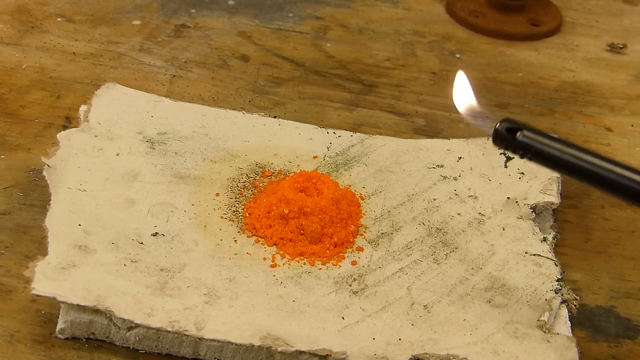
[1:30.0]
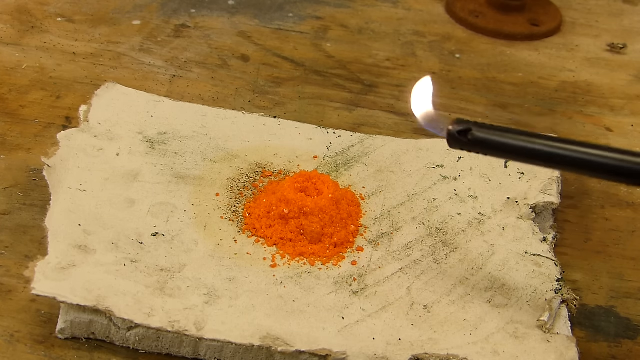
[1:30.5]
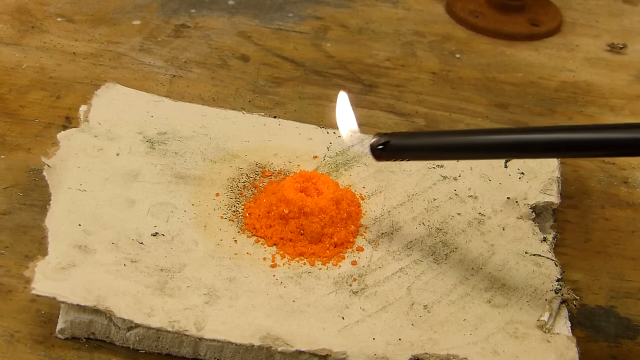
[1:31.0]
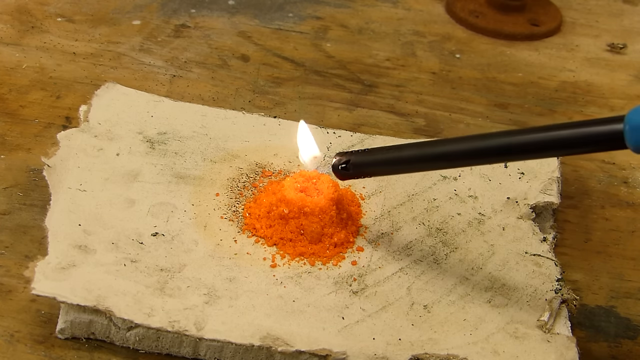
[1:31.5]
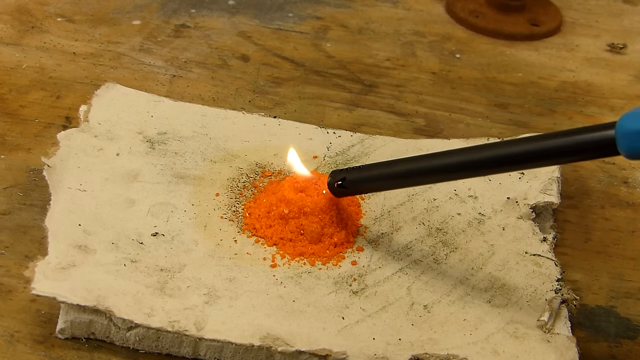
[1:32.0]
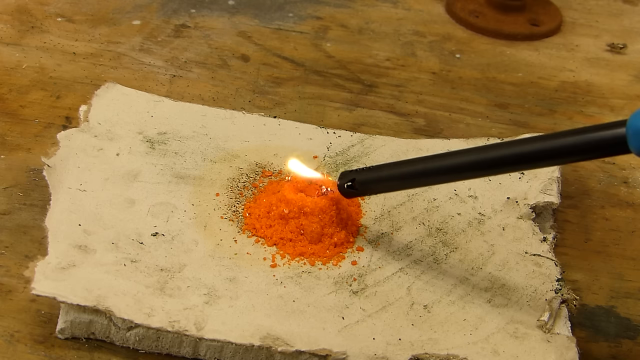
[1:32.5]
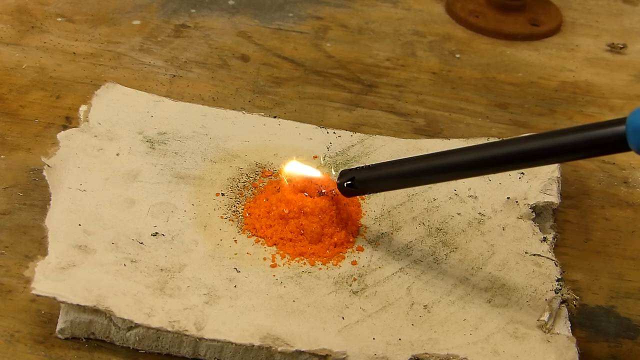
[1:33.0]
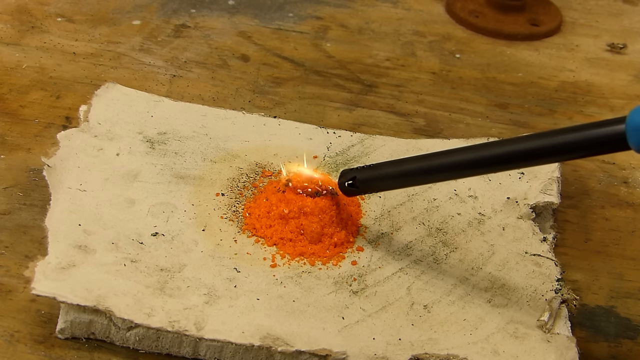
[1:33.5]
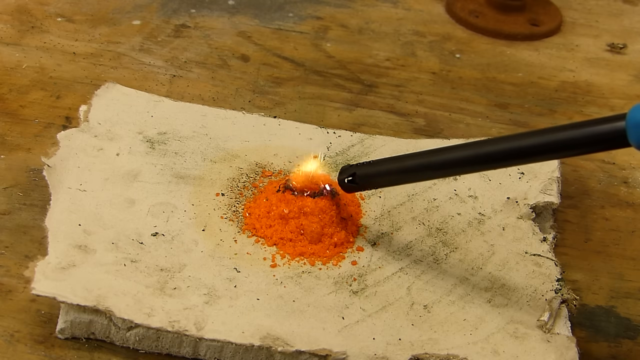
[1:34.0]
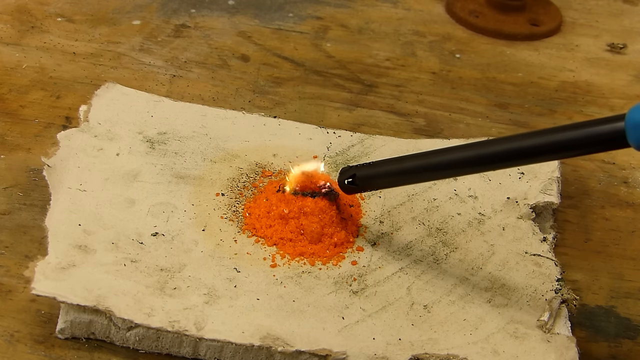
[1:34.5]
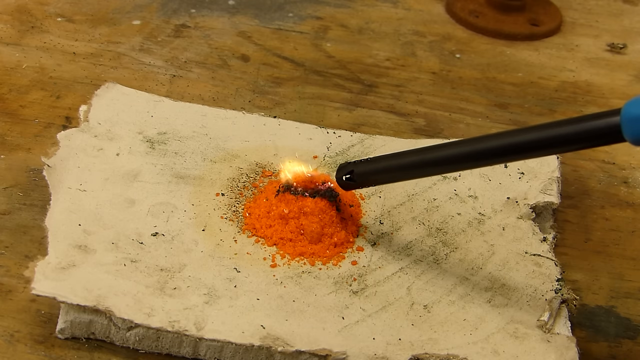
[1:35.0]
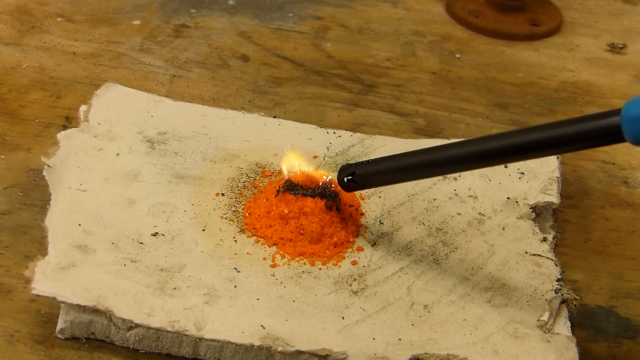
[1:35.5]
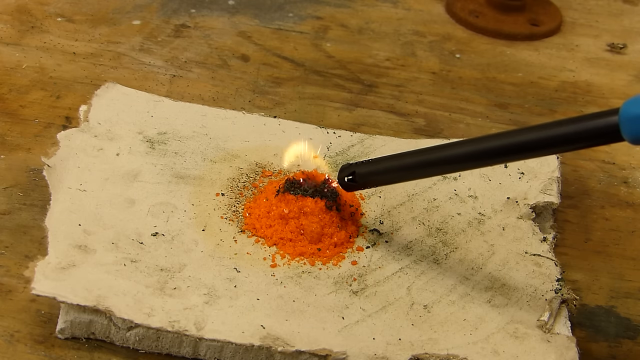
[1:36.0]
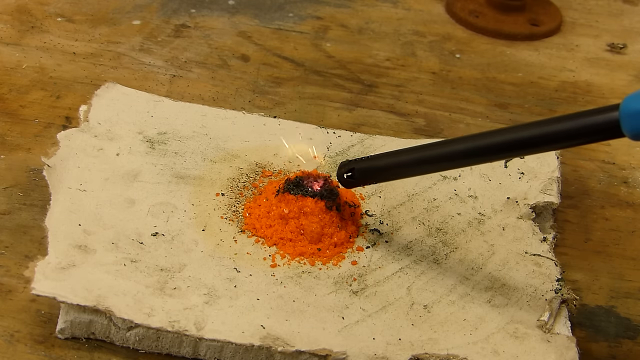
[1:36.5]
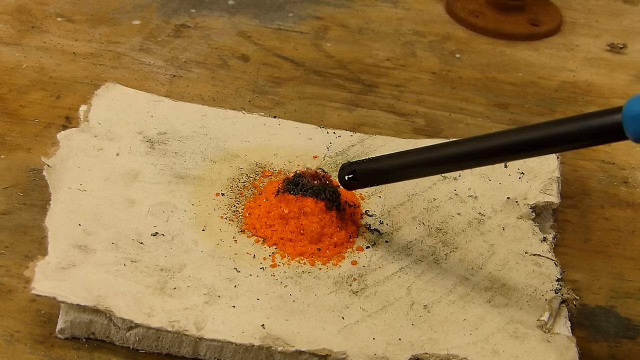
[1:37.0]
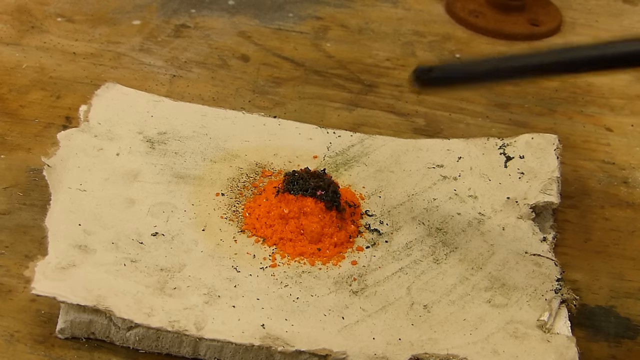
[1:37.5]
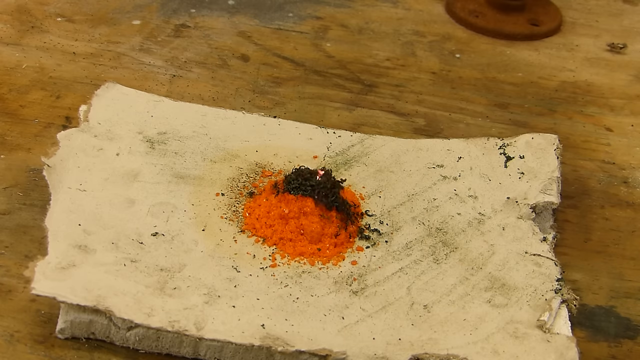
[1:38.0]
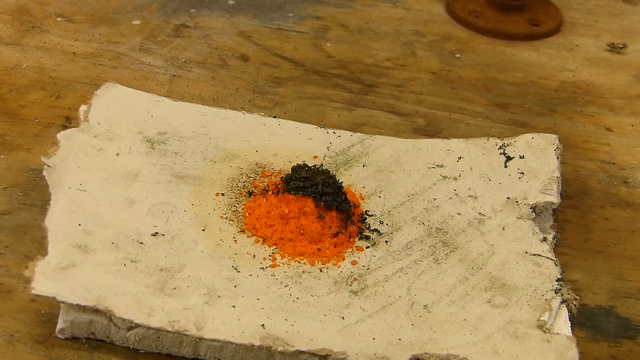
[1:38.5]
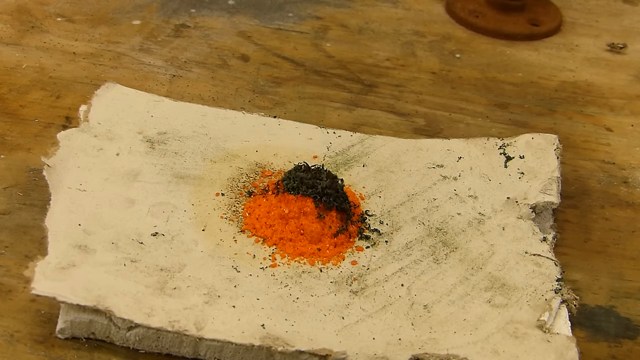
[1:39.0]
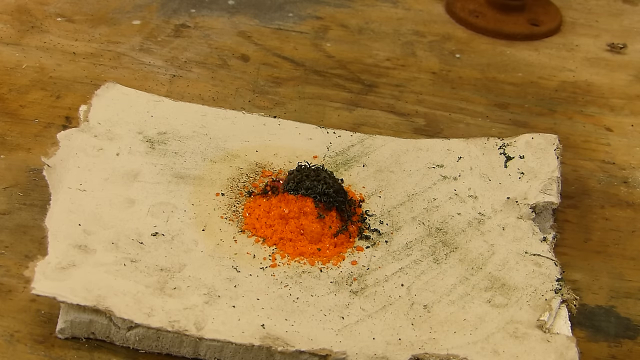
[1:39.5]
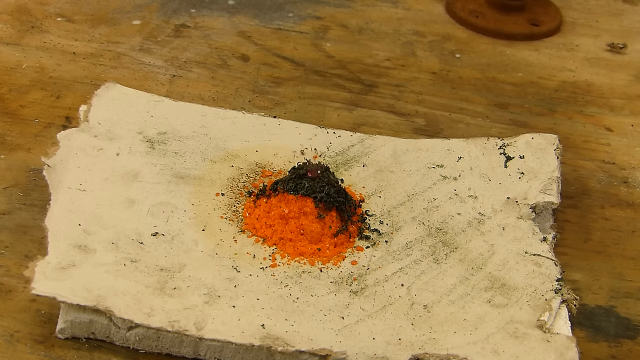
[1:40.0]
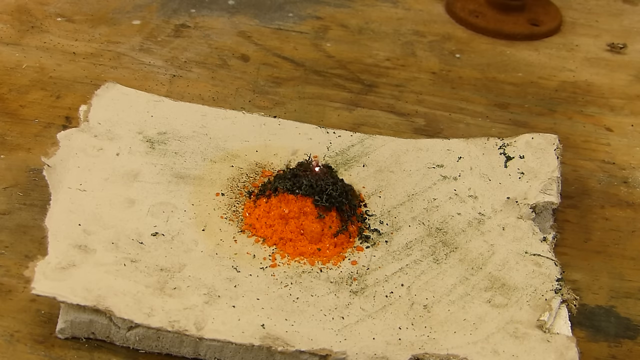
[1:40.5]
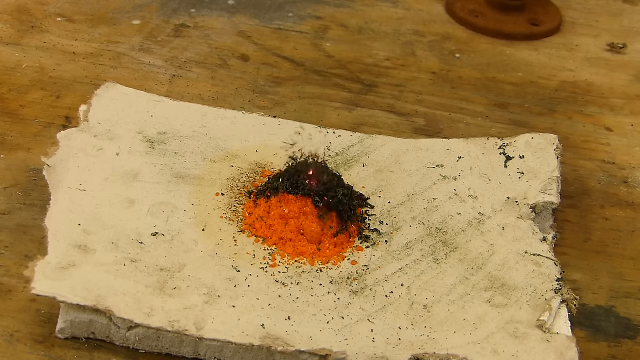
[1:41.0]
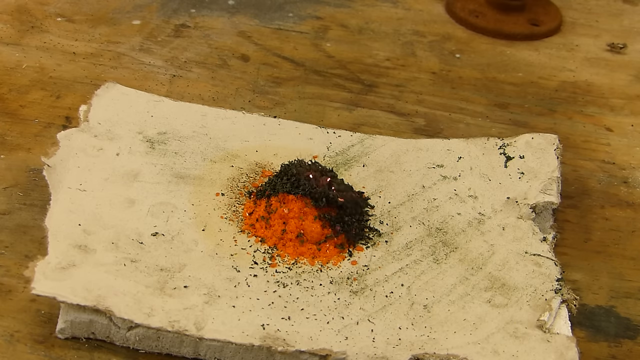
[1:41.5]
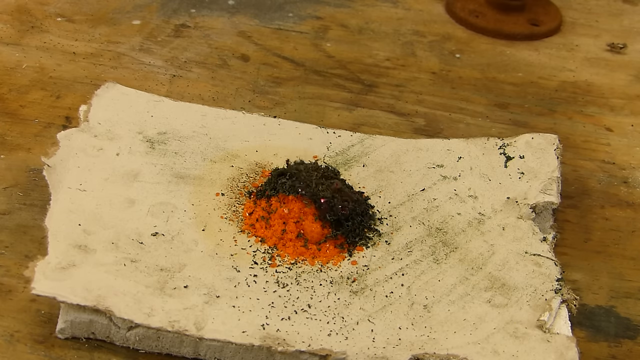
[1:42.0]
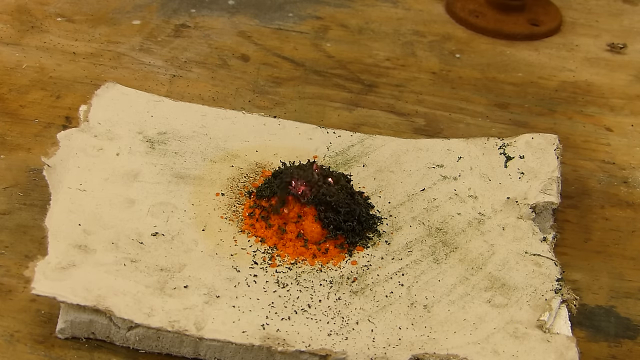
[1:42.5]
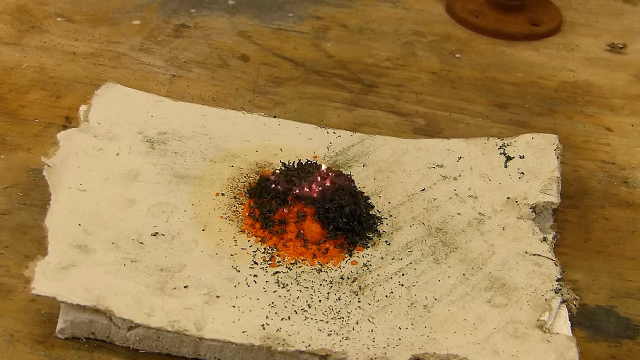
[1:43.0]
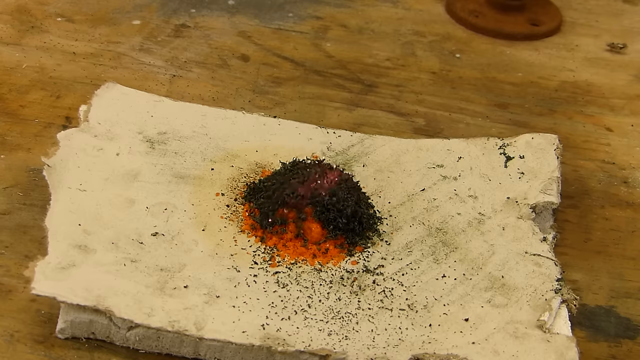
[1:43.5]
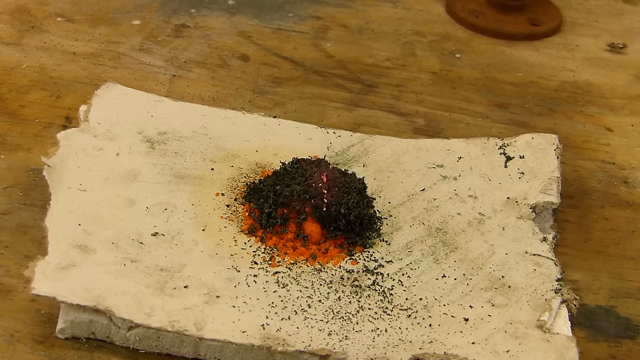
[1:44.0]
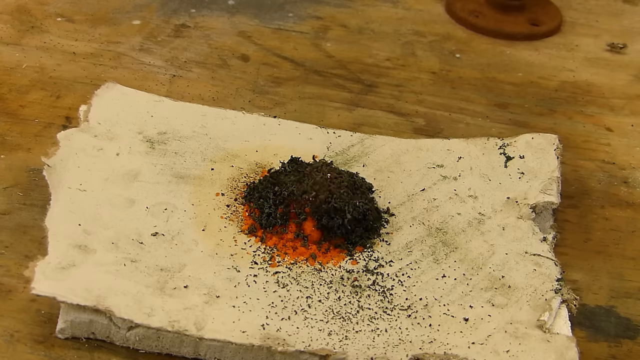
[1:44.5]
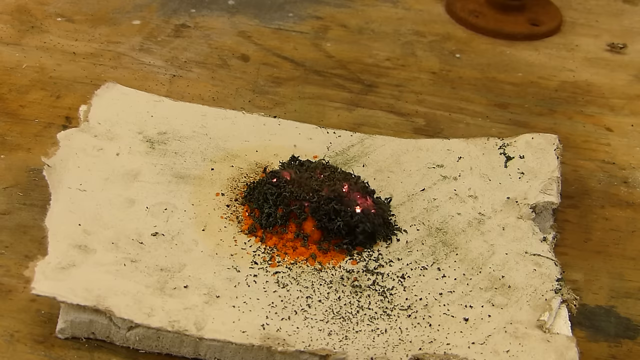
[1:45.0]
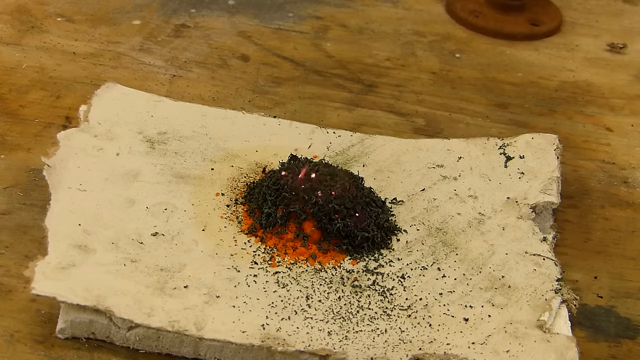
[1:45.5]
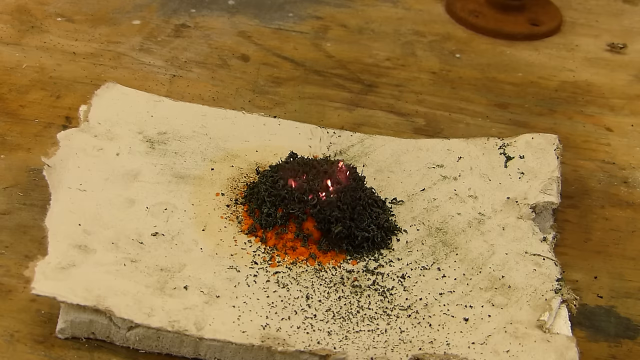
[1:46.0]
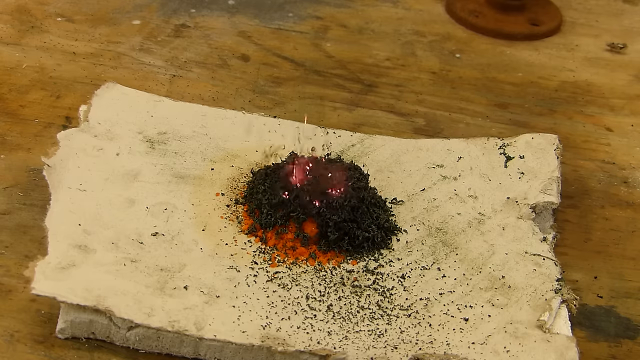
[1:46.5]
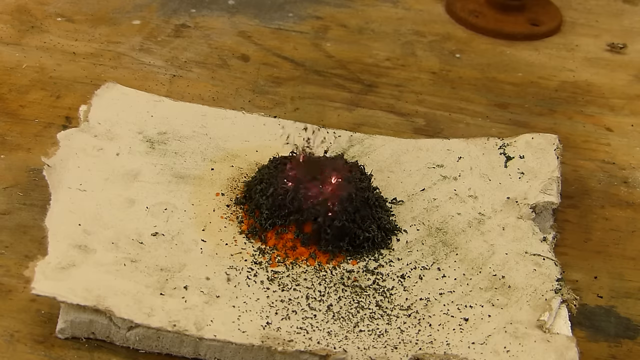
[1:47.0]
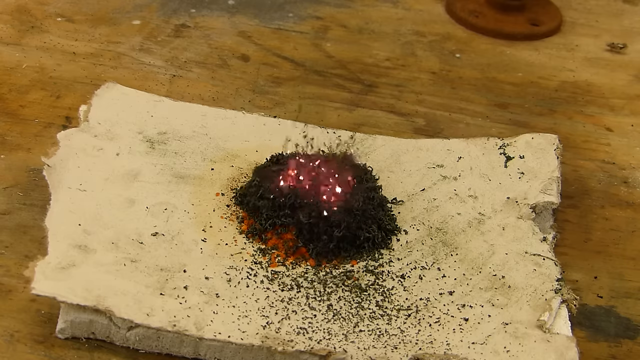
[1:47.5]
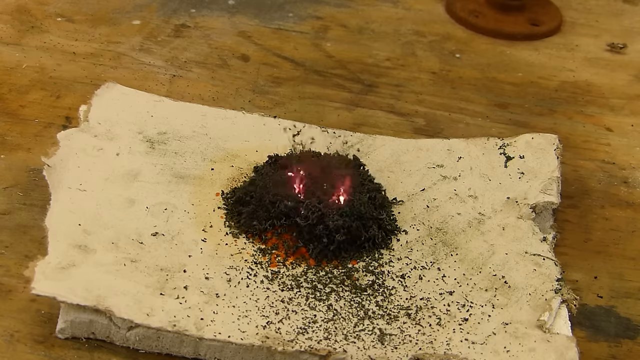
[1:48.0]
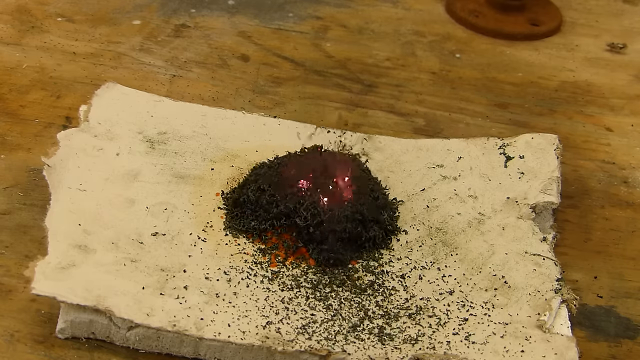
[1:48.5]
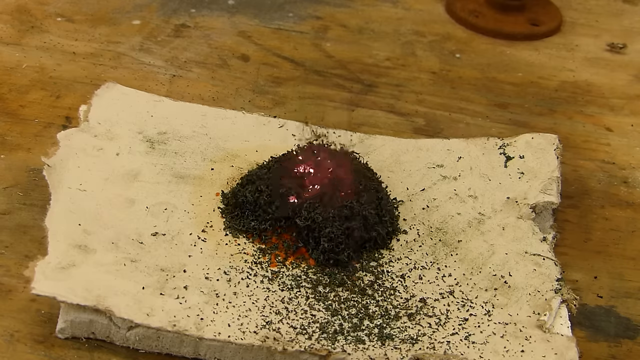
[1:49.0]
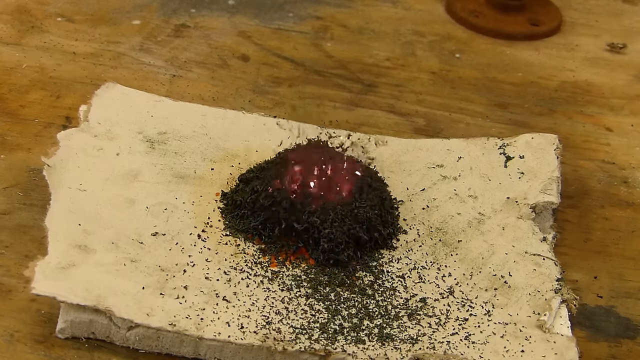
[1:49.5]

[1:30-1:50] The orange pile of ammonium dichromate, the formula shown earlier on the board, is on a rectangular slab of wood whose smaller sides are jagged and not smooth, and the slab is on a distressed wooden surface. A lighter comes in from the lower right side with a flame coming out of it. The person lays the tip on top of the orange pile, and it starts to sizzle a little with very small sparks as it turns black. Only a little of it is lit, but it keeps going; he moves the lighter away and the pile continues turning black, with fire sparks coming out, until the whole thing is turning black without the fire. A bigger, double spark appears.